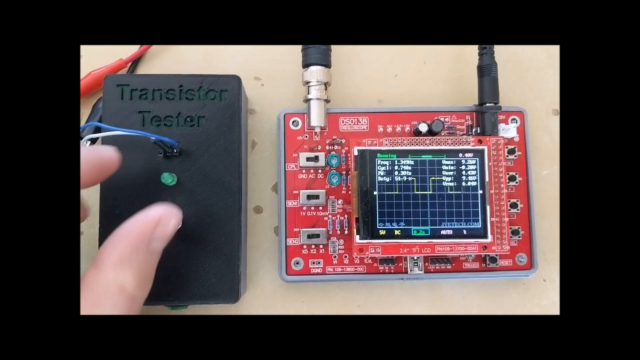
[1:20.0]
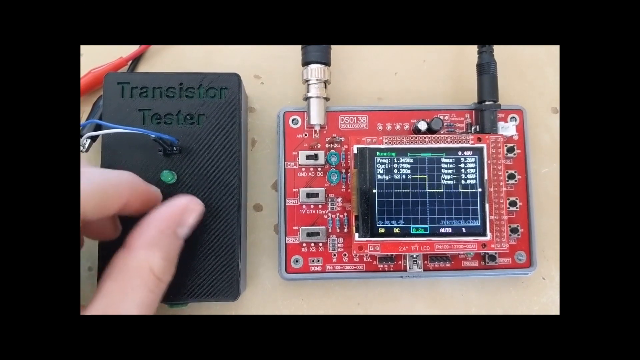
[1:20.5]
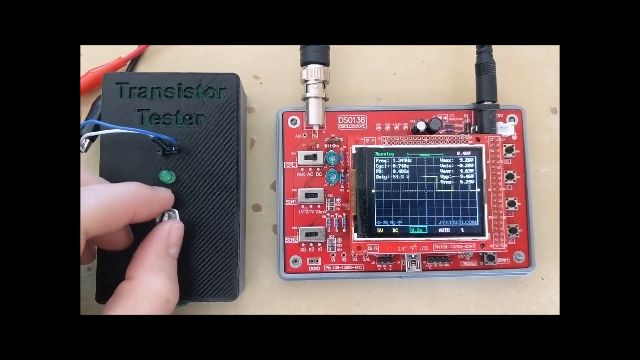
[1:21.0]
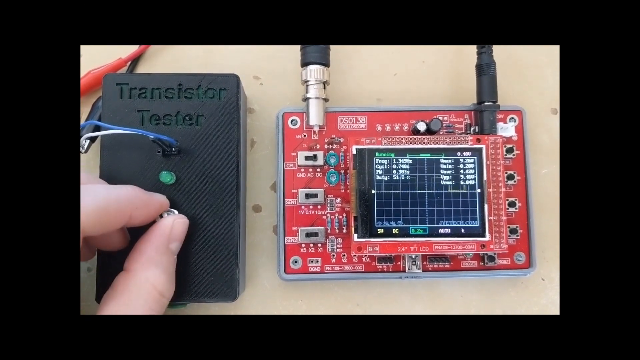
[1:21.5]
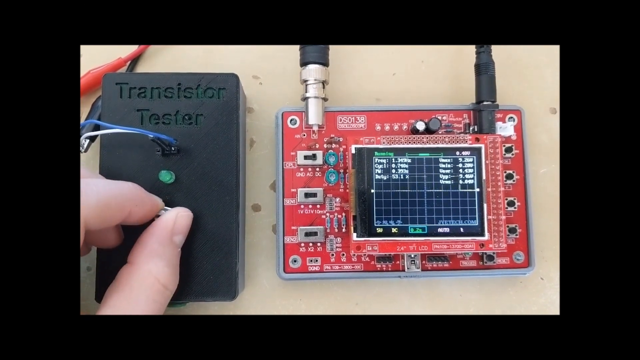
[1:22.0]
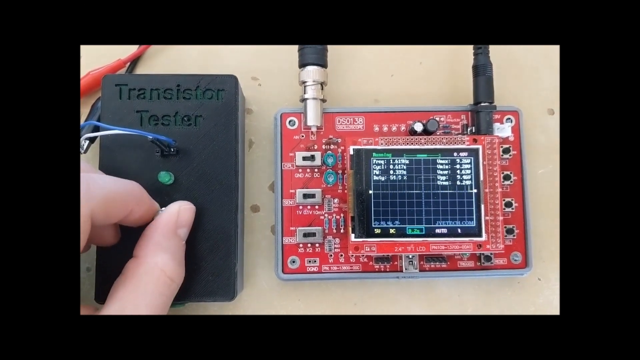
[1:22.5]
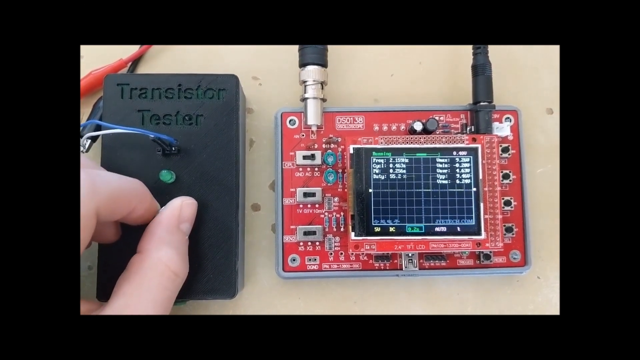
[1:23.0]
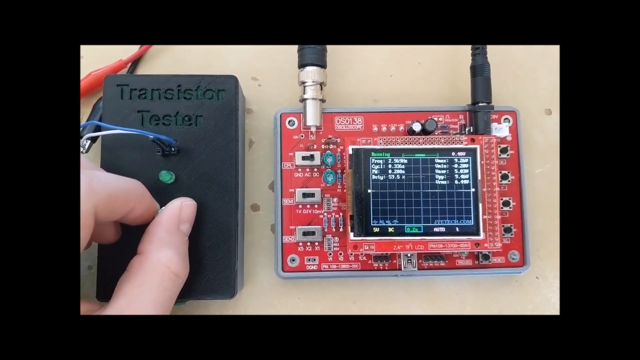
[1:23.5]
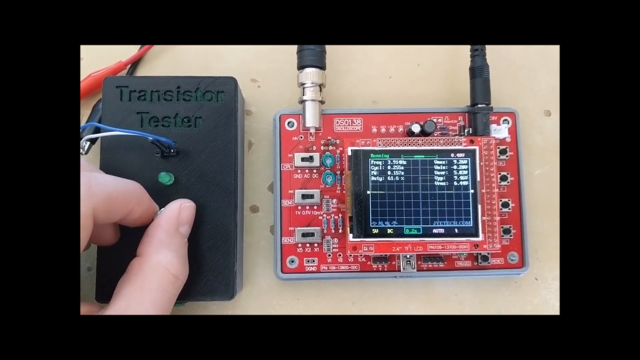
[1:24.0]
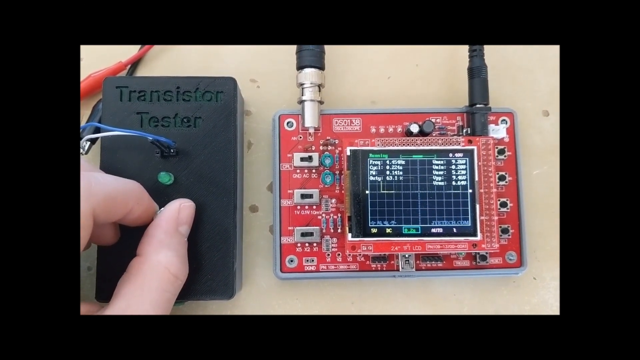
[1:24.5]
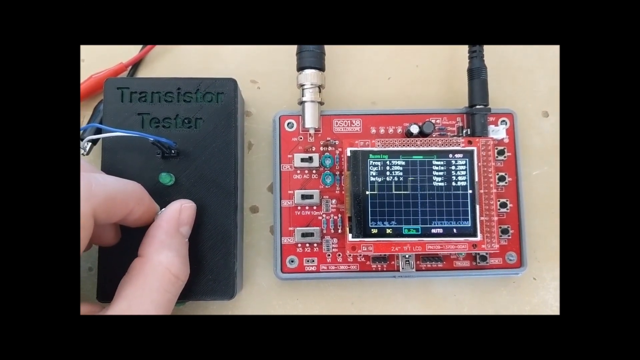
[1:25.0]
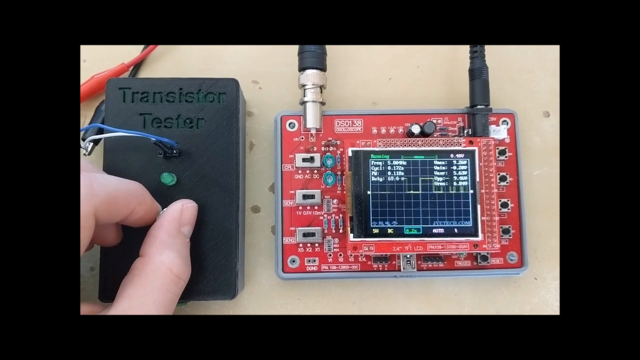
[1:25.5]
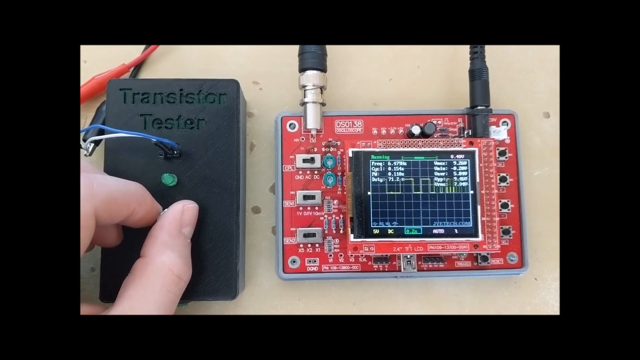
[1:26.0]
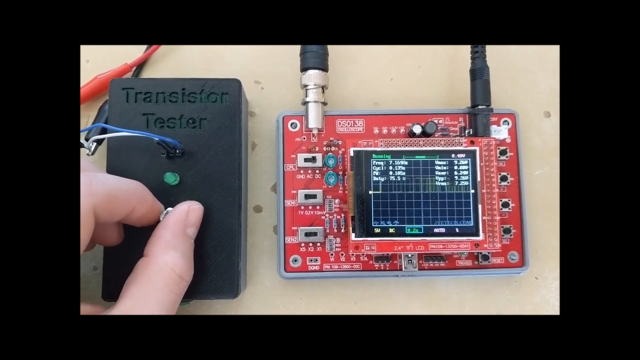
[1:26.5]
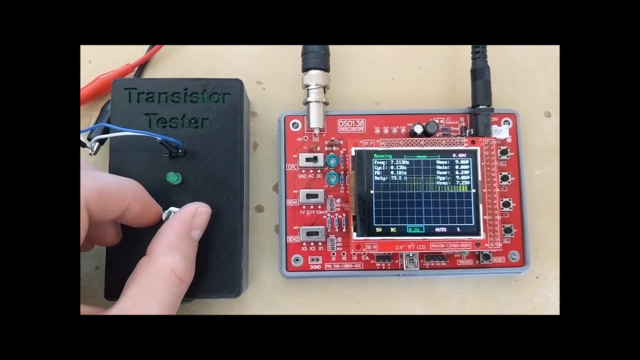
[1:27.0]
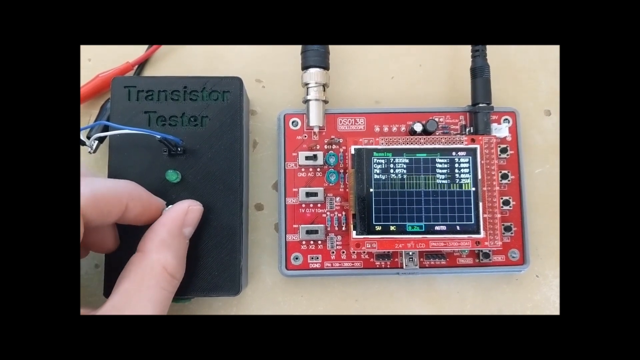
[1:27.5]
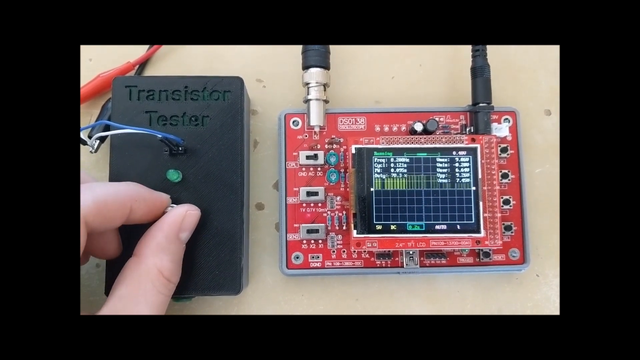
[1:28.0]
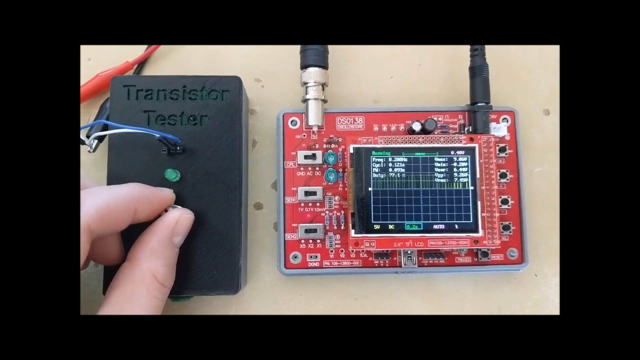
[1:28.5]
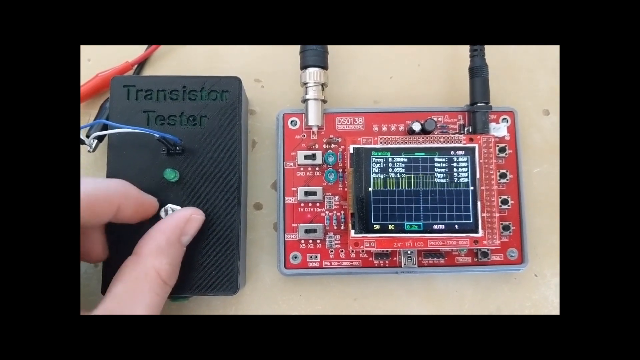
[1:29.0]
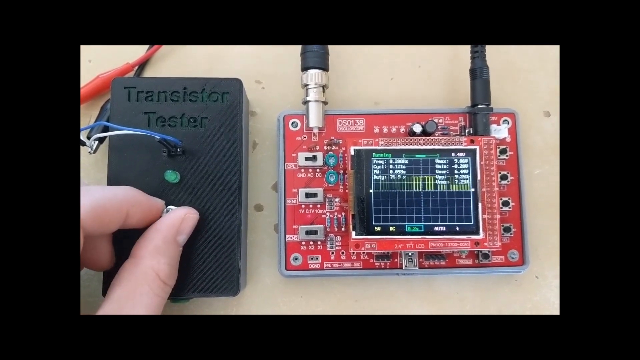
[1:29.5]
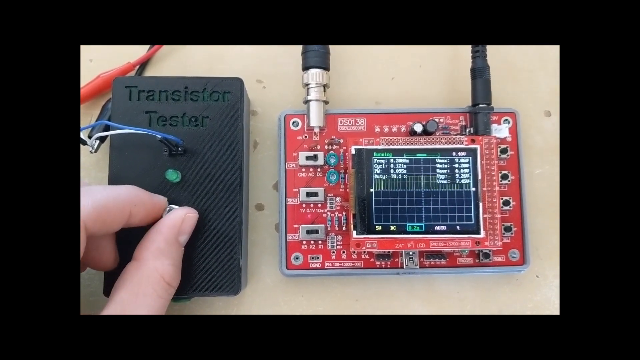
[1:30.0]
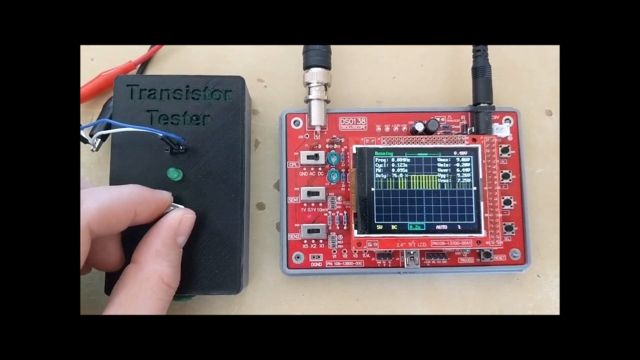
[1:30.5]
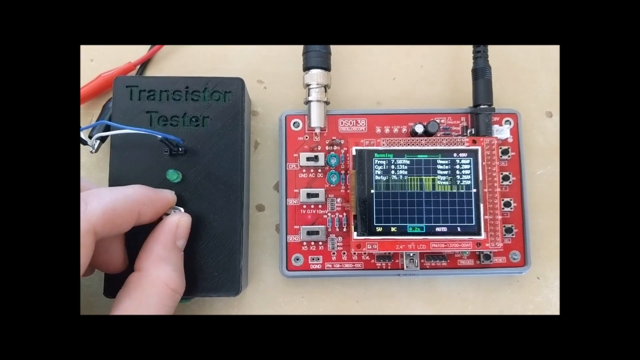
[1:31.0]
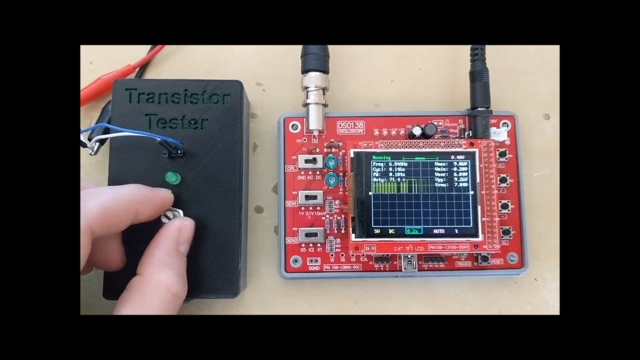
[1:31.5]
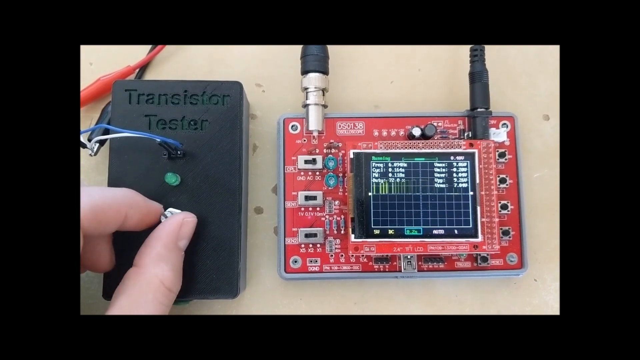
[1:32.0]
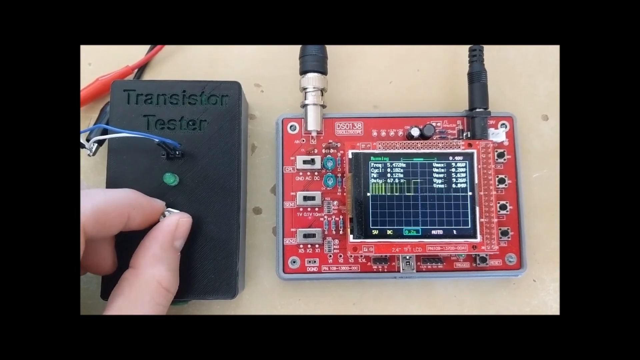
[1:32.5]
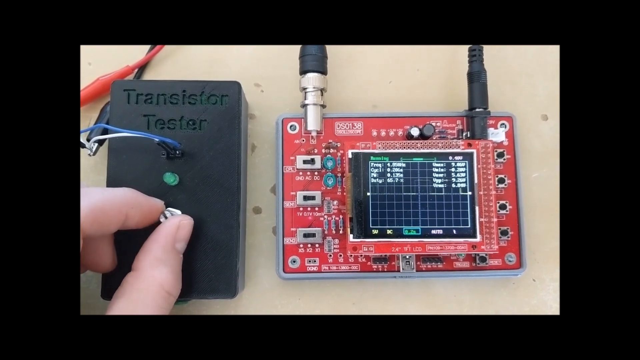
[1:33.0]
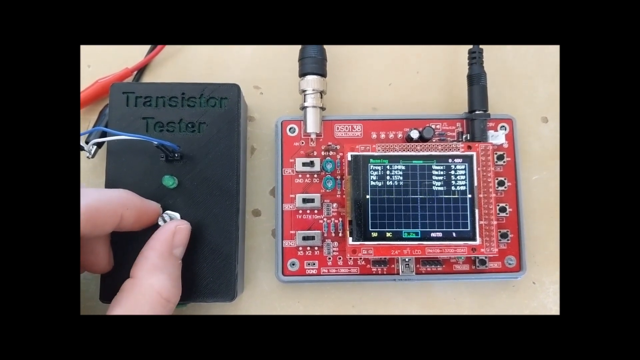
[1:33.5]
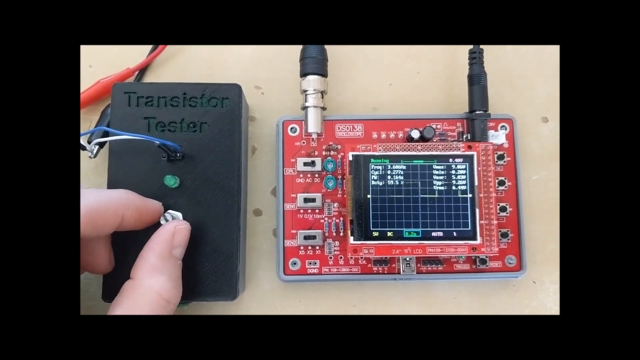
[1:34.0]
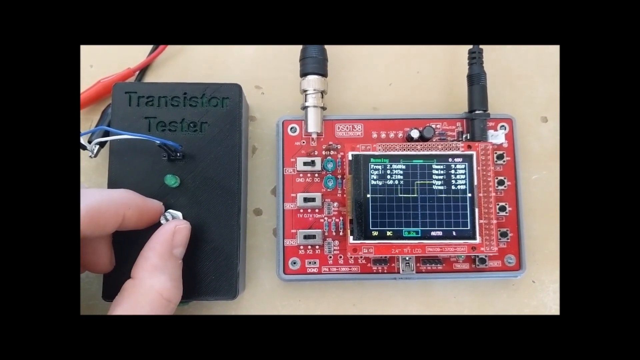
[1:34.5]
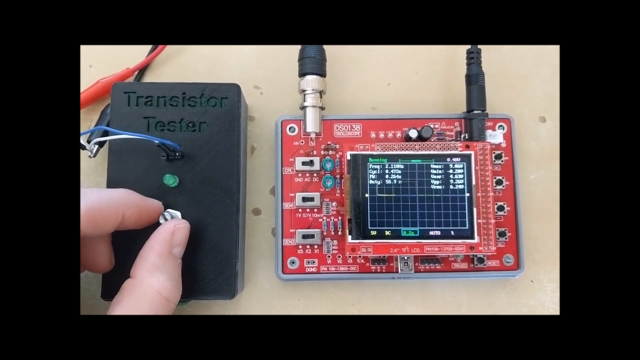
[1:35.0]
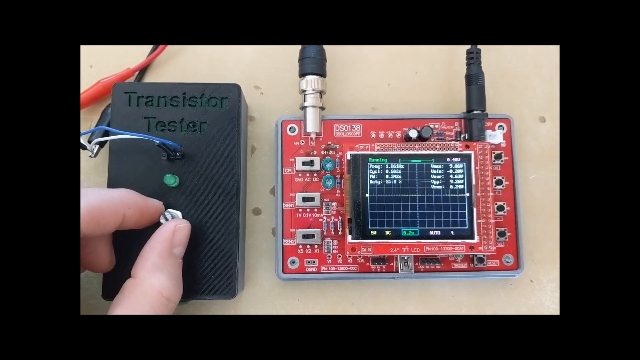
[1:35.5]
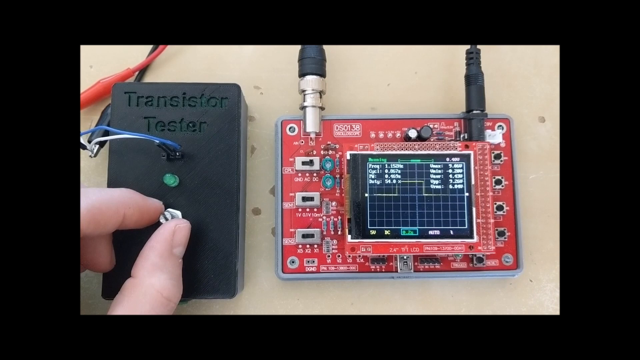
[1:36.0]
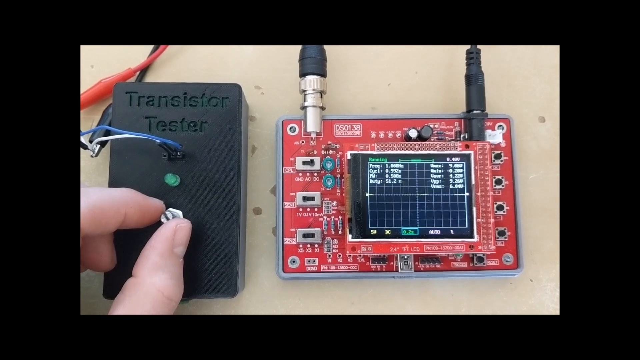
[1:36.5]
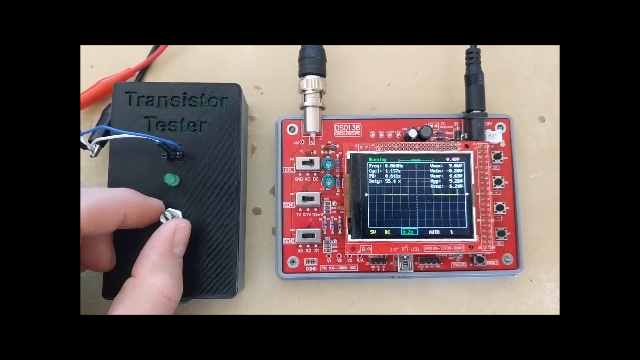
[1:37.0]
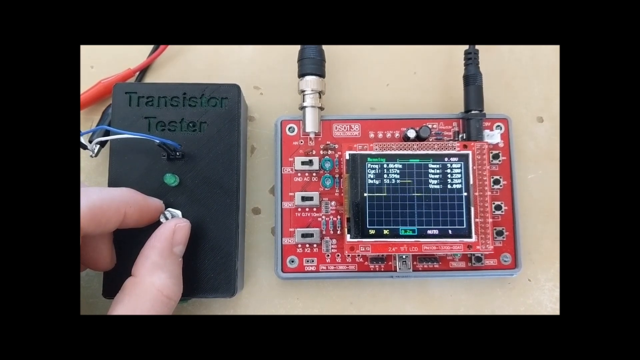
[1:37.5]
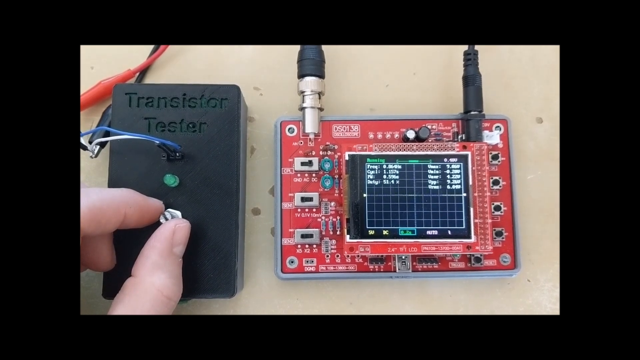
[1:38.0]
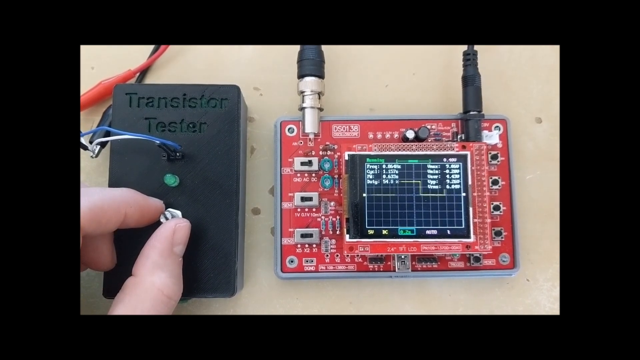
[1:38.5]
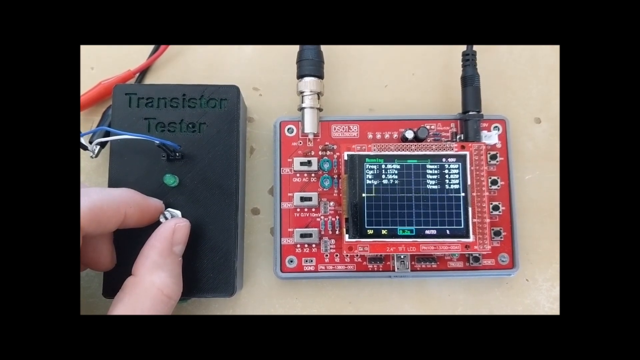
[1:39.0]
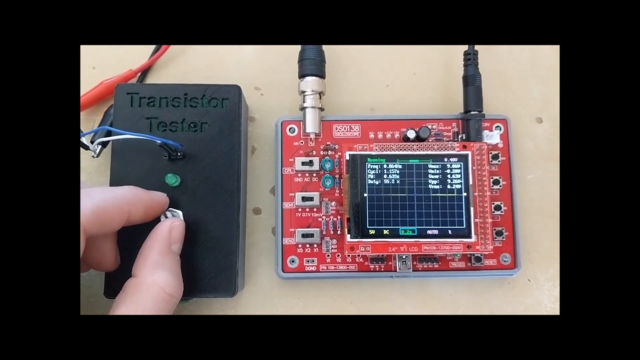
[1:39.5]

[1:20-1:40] Someone's hand is about to touch a black transistor tester with a green light lit up on the left. Beside it are the inner working components of a device. Someone twists the nut and bolt on the one on the left, and the system on the right responds as he tightens it, producing something like a graph: as he twists further it goes faster, and as he twists back it goes slower. The device has electrical wires attached, a red line and a black line. The component in the back is mostly red and has a screen that looks mostly black, with some green and yellow lines running through it.